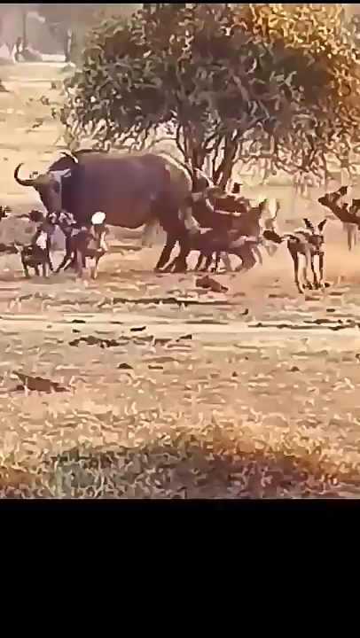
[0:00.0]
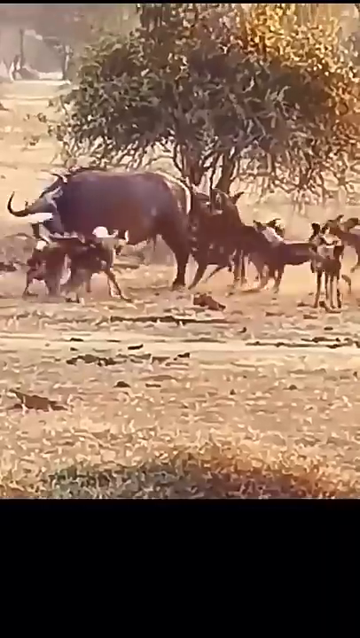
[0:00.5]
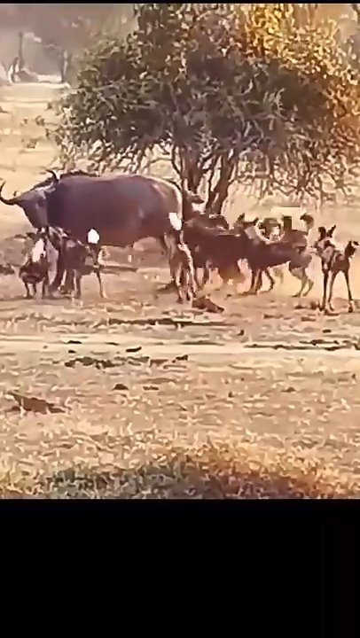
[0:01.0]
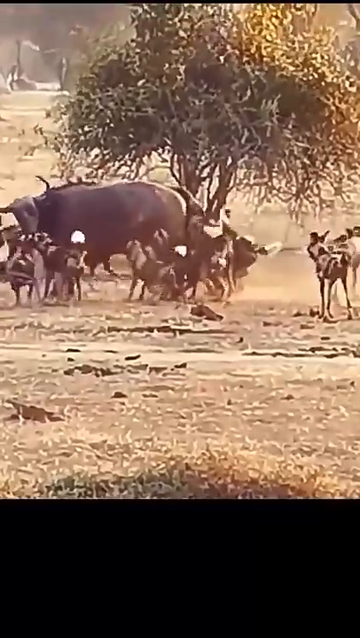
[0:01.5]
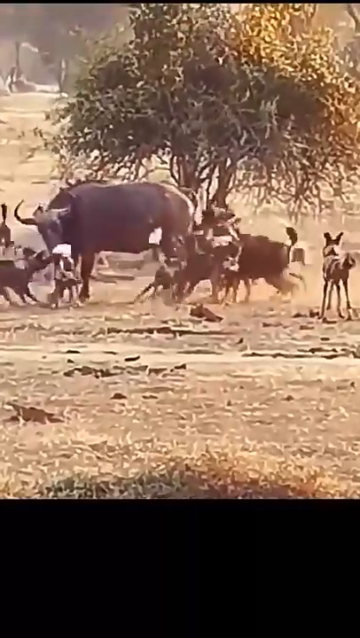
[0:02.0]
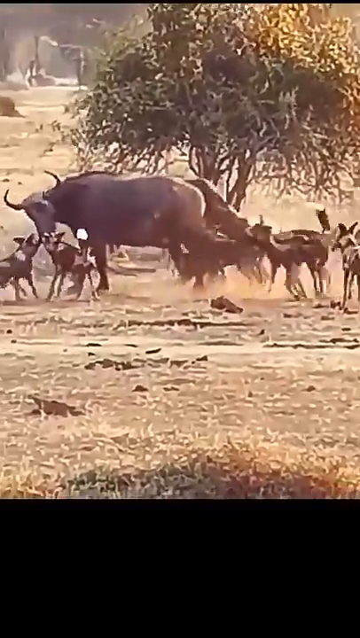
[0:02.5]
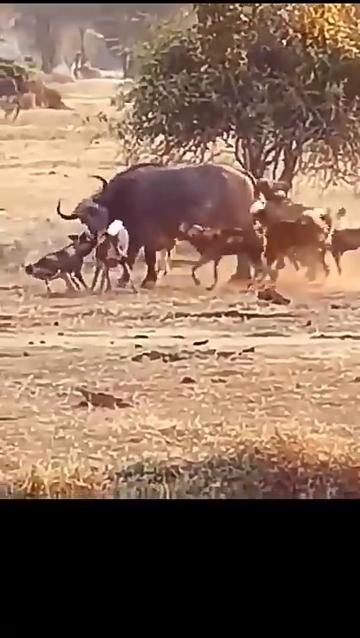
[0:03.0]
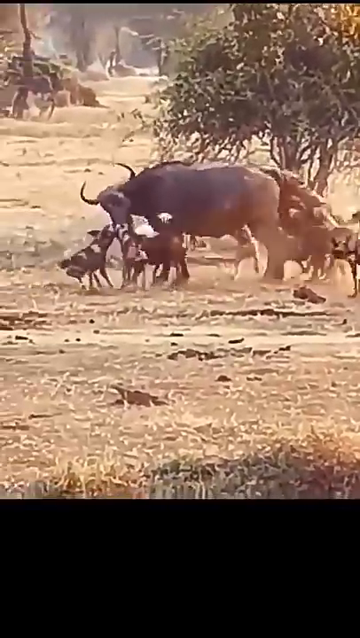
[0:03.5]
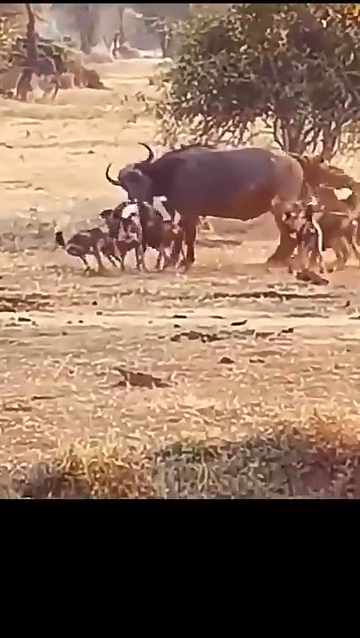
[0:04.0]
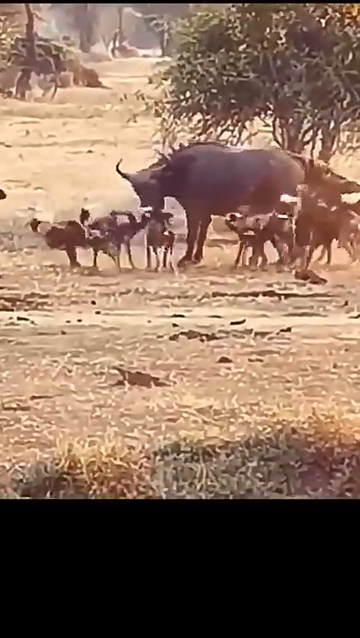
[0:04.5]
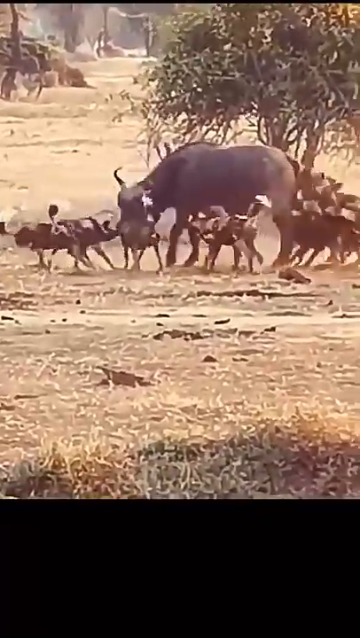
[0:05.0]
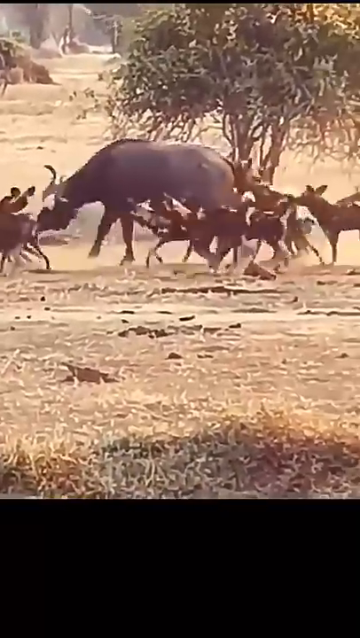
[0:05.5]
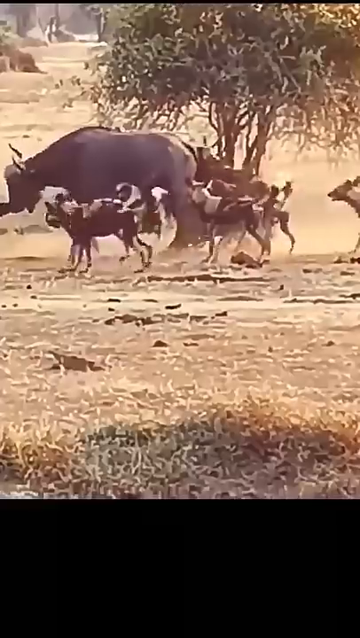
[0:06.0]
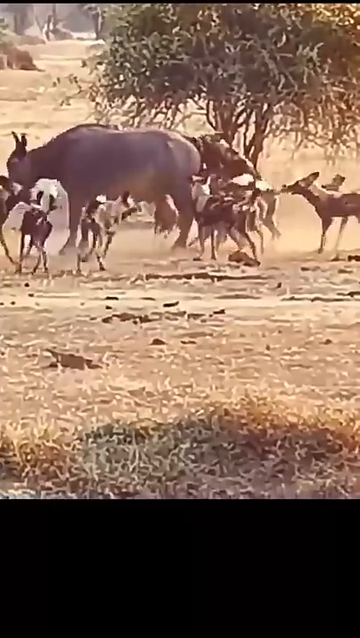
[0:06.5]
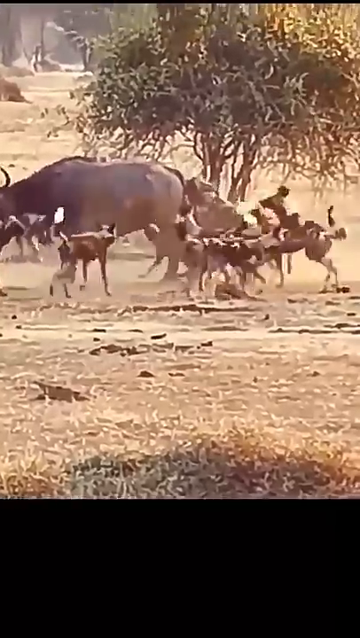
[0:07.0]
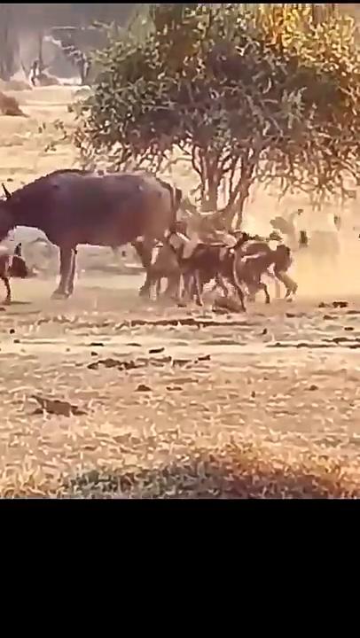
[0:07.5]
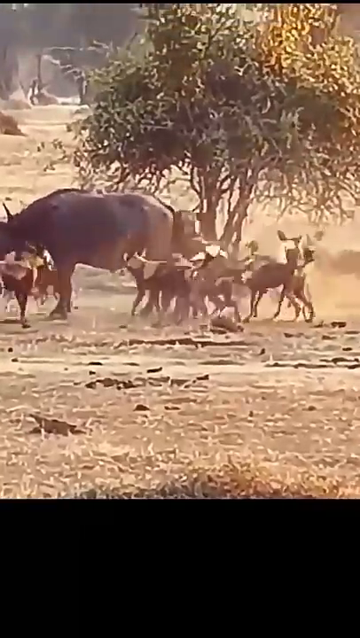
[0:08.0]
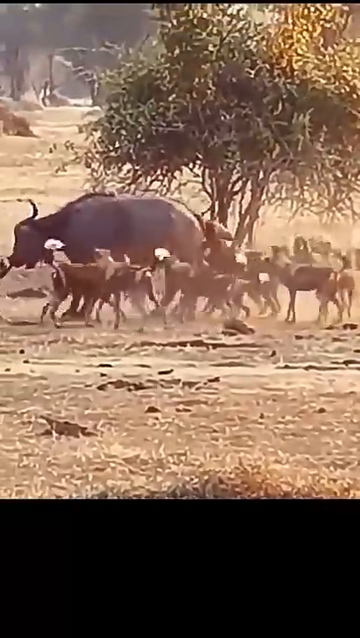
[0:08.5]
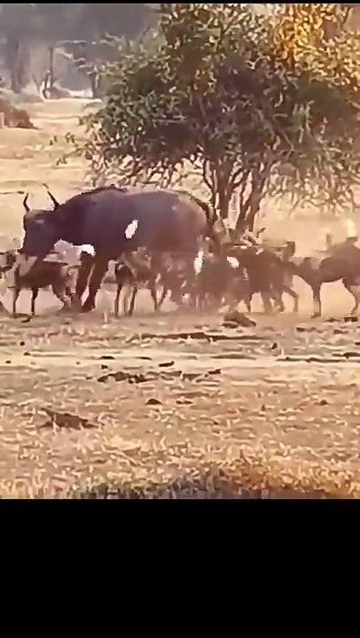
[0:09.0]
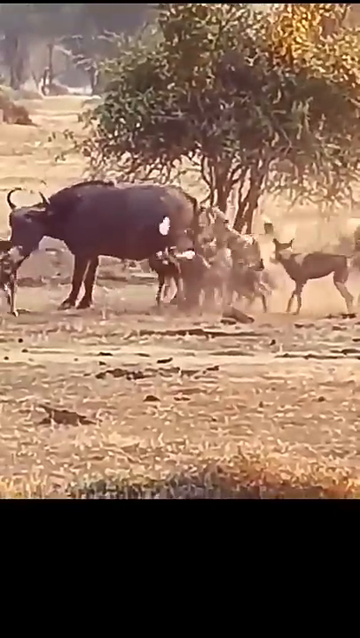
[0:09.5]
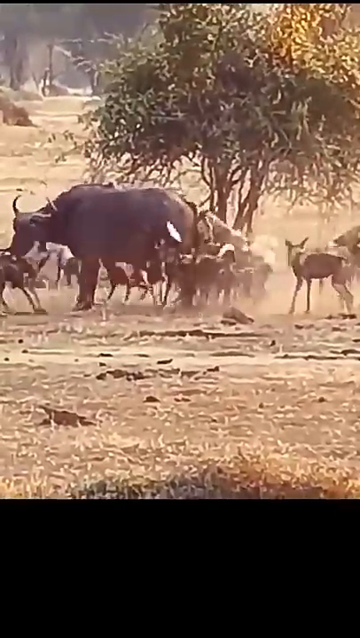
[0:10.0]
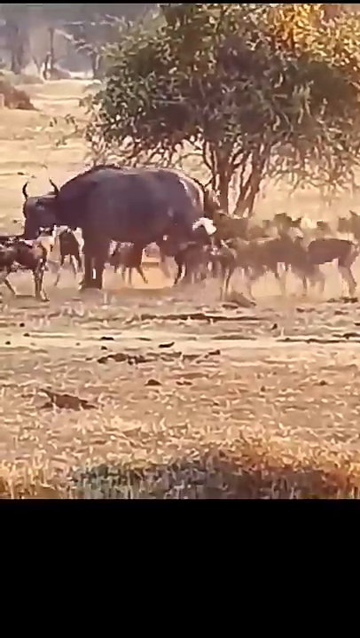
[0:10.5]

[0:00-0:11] The footage looks somewhat like a nature documentary and appears to be filmed from quite a distance away. It is not very clear and somewhat grainy, but the action is visible. On a brown dirt plain, with one lone green tree off in the distance, a large pack of dogs attacks what appears to be a buffalo or a bison, most likely a buffalo. The animal has two horns, one on each side of its head, and a little hair along the top of its head, the back of its neck and the front of its neck, but apparently no hair on the rest of its body. There might be about 20 dogs against the one buffalo. The dogs run around very quickly, biting at its back legs and tail, and some bite directly at its face, while others are sort of running around, stirring up dust and gathering other dogs. The dogs appear to be black and white spotted with white tails, and they viciously run back and forth, attacking the animal.